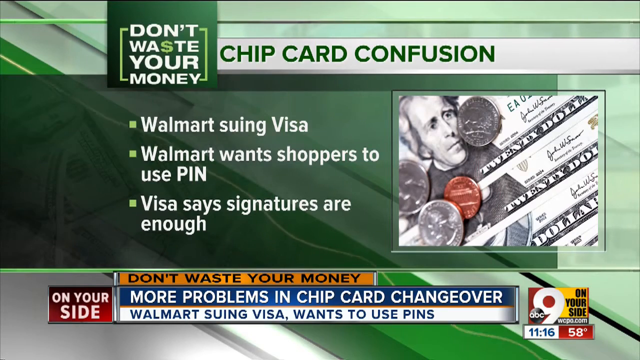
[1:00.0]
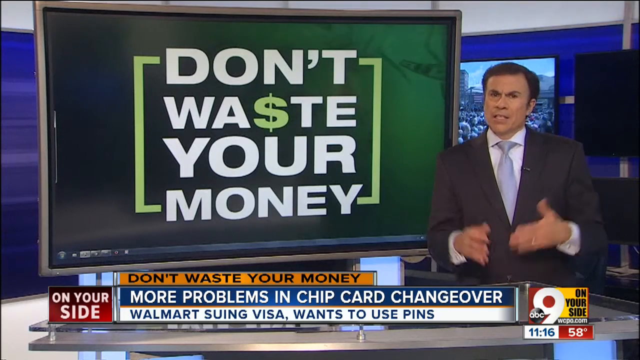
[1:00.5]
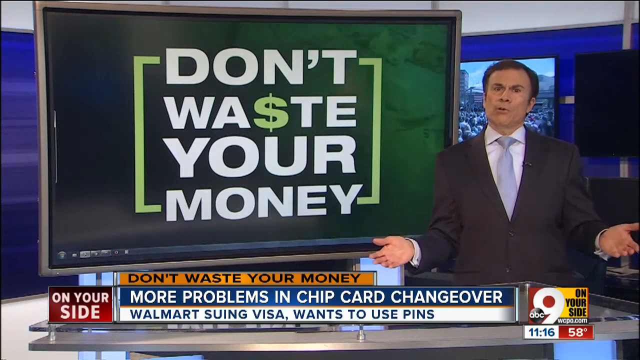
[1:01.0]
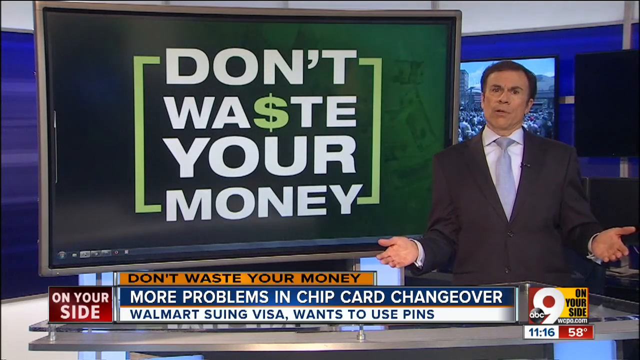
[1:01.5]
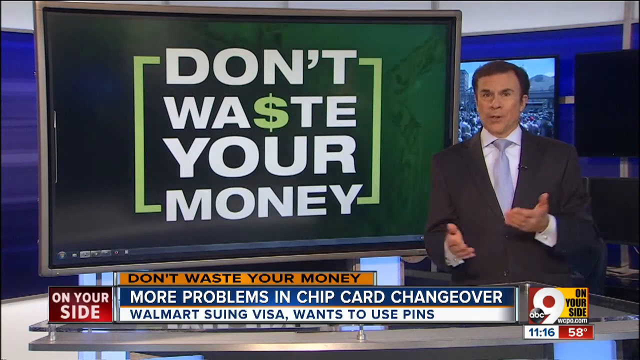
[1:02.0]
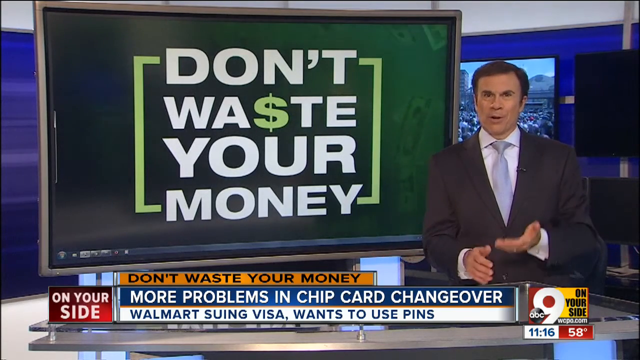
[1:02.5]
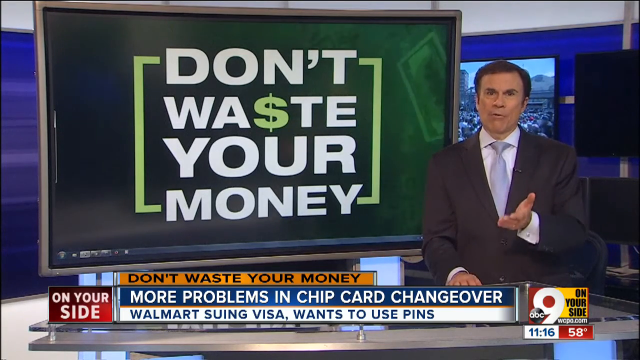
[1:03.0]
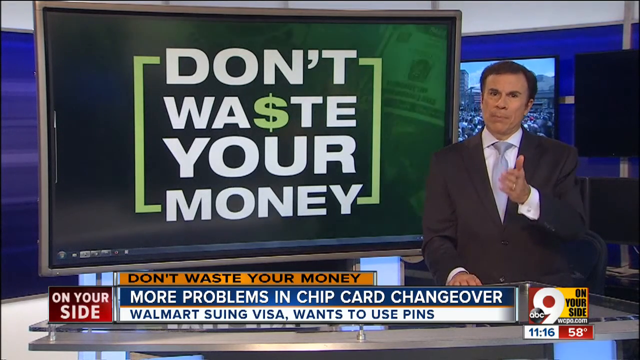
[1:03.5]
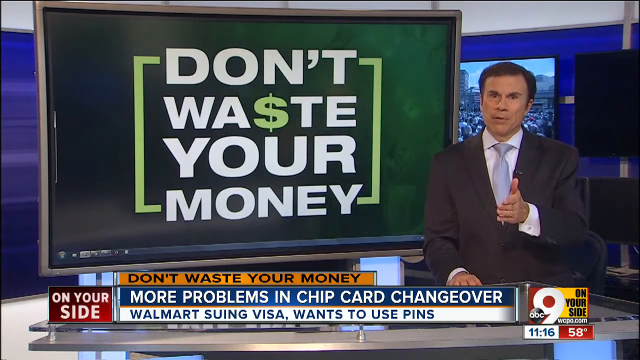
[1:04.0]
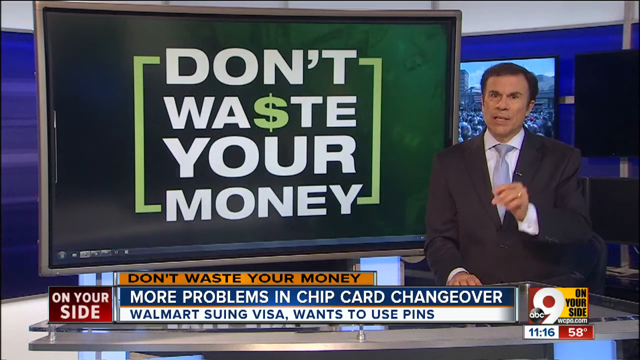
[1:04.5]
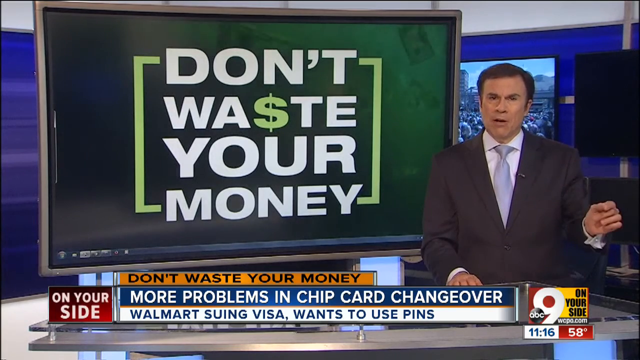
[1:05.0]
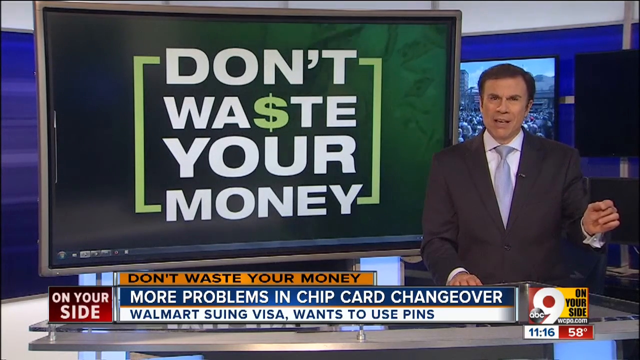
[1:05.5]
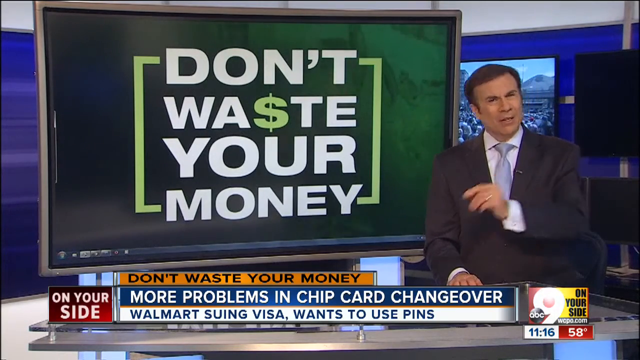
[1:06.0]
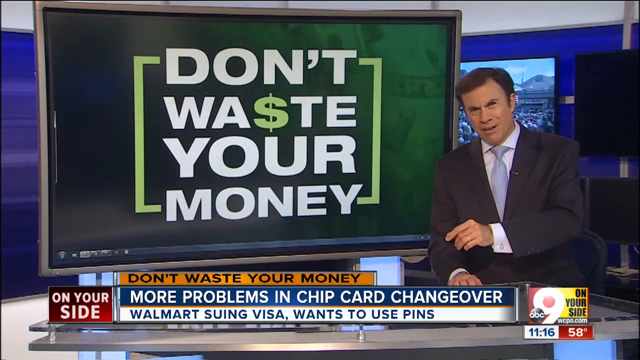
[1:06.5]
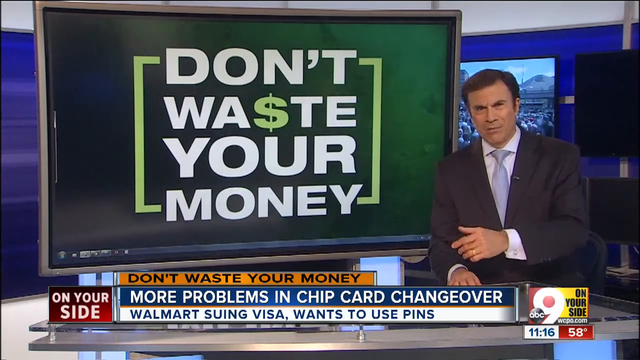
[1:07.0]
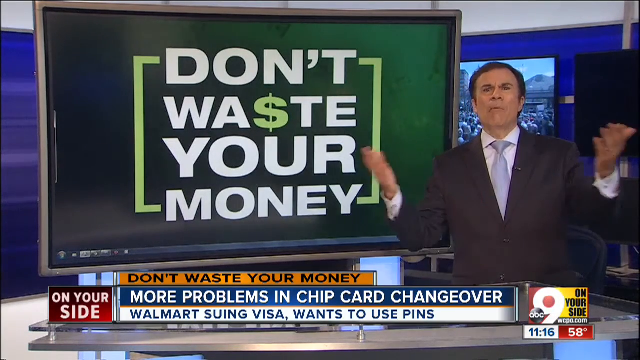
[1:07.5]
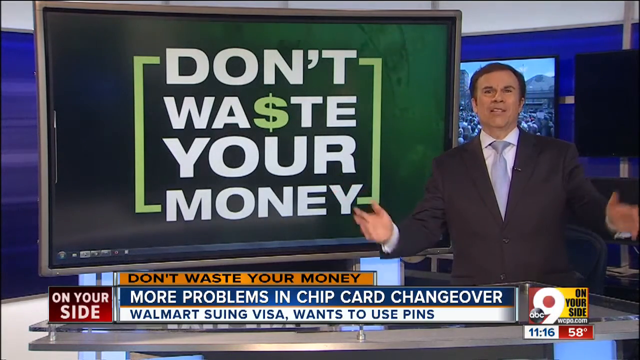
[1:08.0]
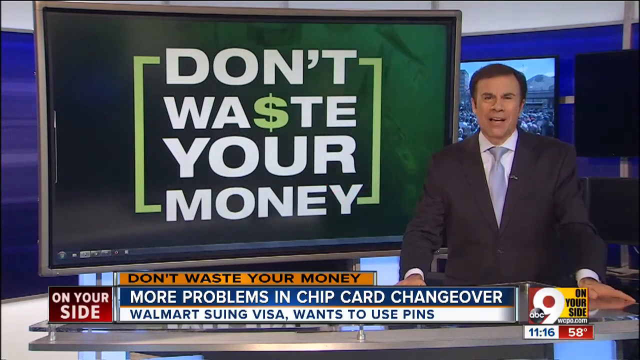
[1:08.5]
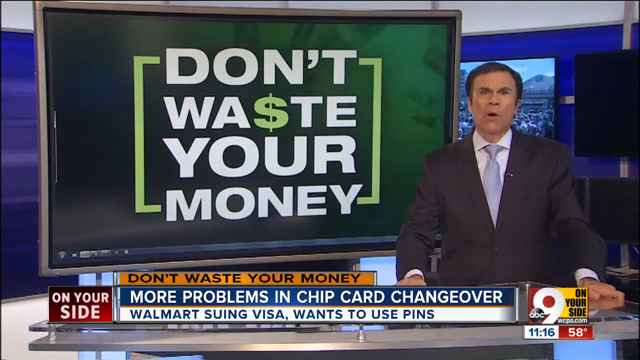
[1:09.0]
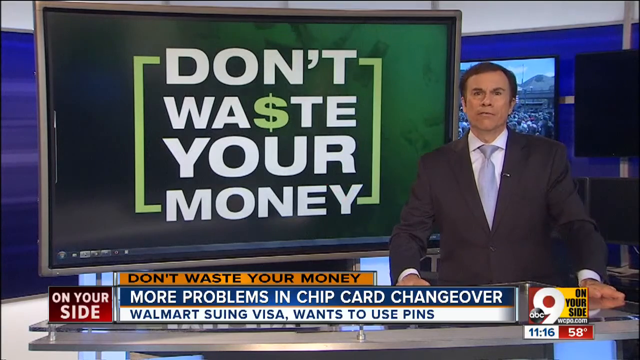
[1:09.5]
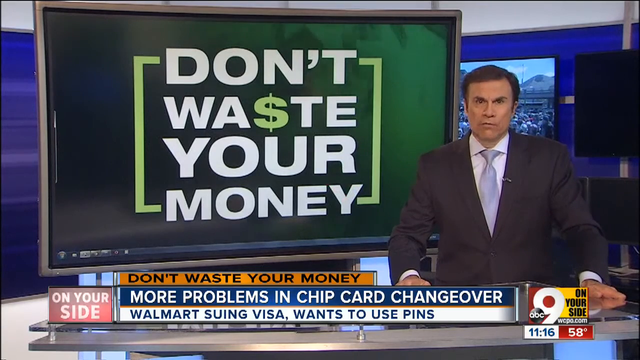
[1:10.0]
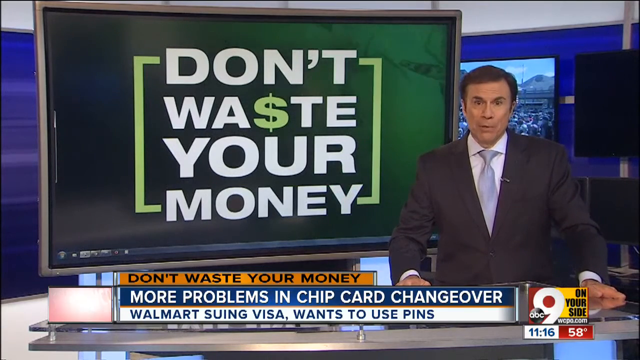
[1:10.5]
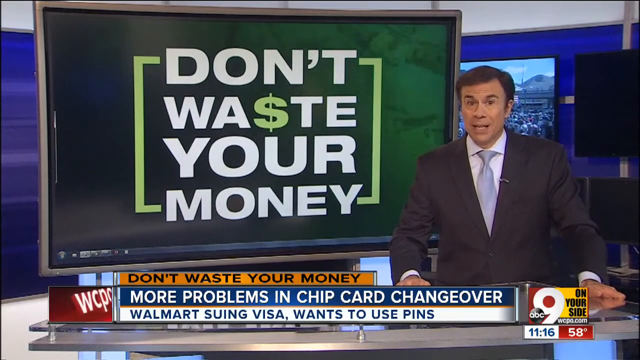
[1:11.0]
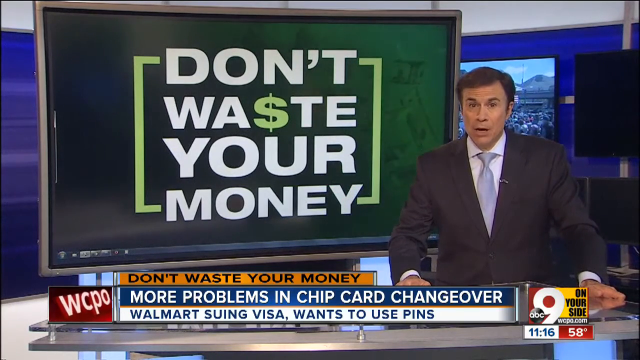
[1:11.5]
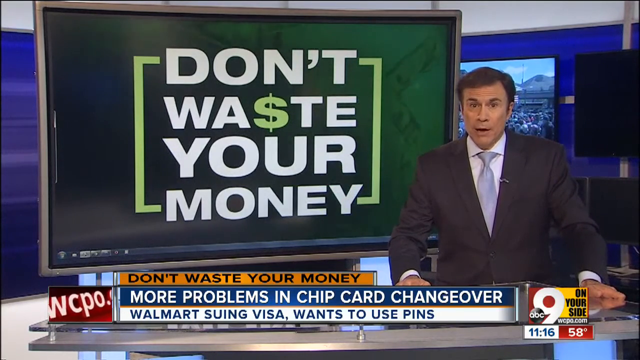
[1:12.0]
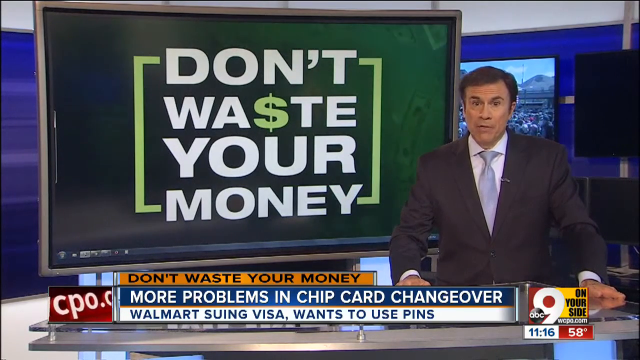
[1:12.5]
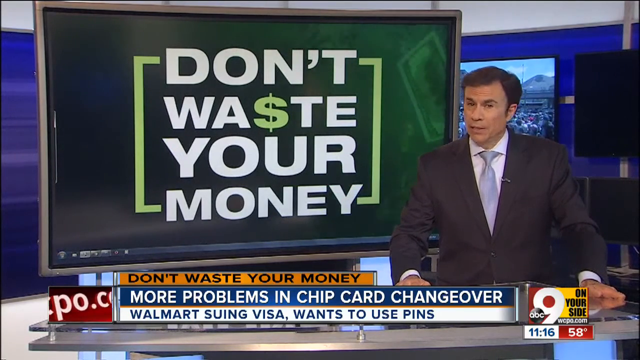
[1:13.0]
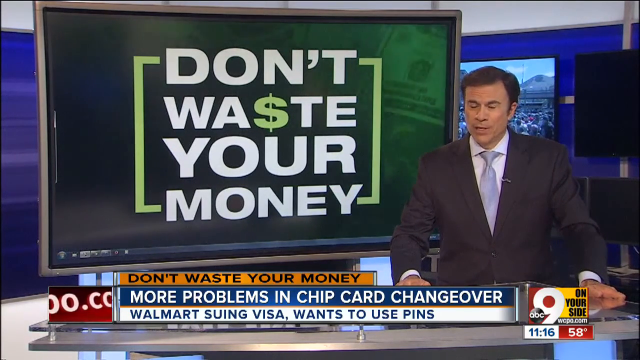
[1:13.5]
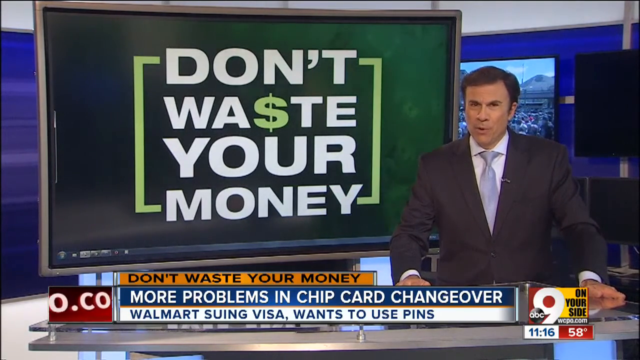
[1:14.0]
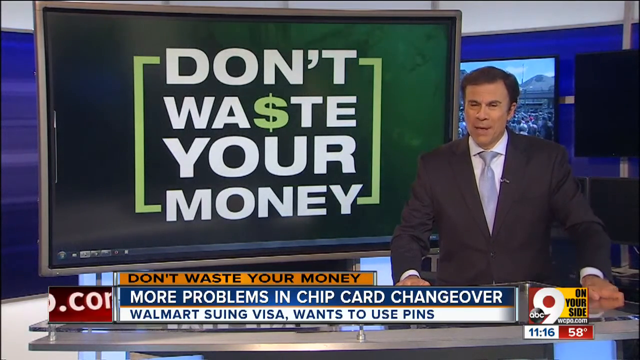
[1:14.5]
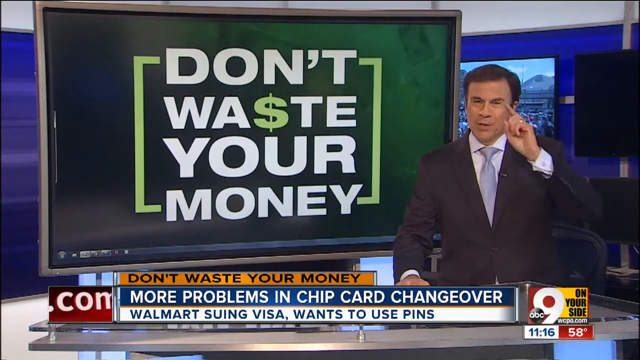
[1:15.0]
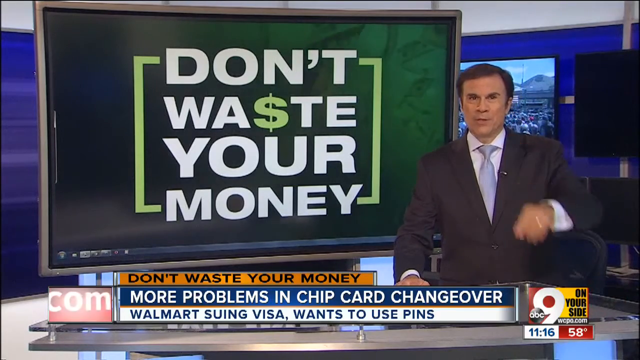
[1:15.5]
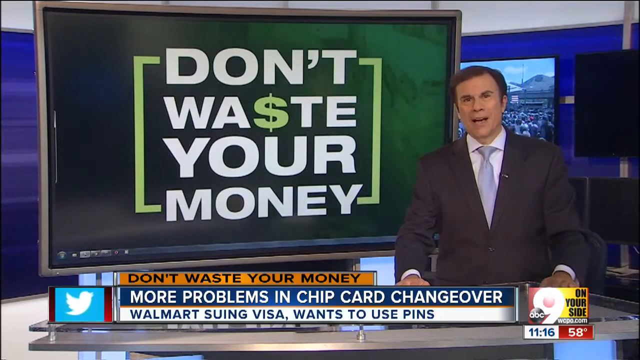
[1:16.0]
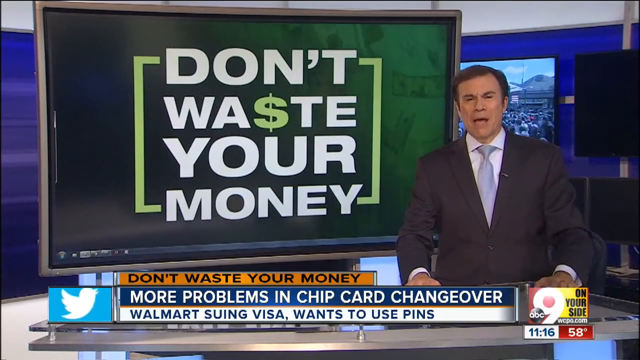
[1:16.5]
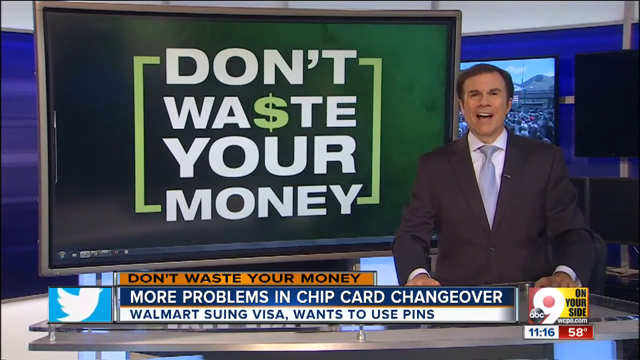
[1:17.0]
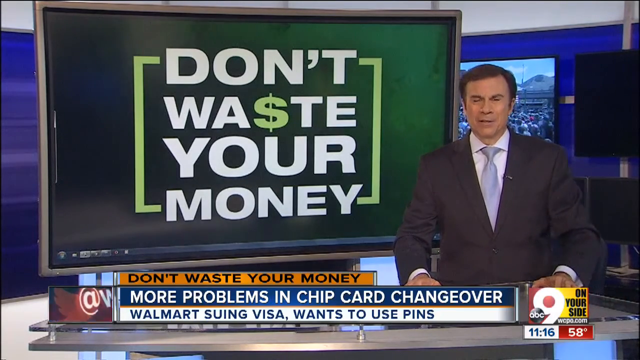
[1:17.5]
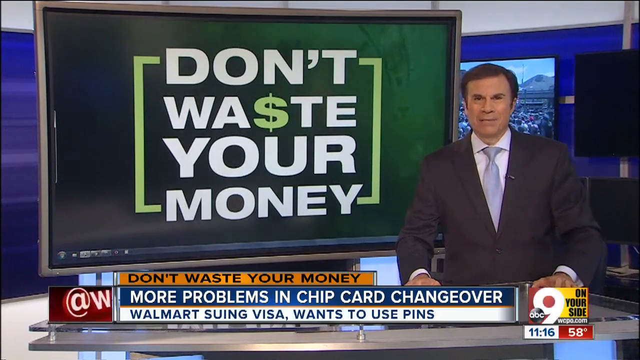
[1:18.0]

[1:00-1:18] The newscaster is off to the right, with the "Don't Waste Your Money" picture slightly in the background but prominently forward. He gestures very drastically with his left hand while his right hand stays still, laying palm down on the desk in front of him. His left hand moves left to right with the finger and thumb touching to form a circle, pointing upward. He moves his hand to his right with the index finger pointing right just above his right arm as he leans slightly right, then moves it outward, palms up, and leans slightly back. He puts both hands flat on the table and leans slightly forward, nodding with eyebrows raised. He then lifts his left hand directly in front of his face, points toward the camera, and puts his hand back down.